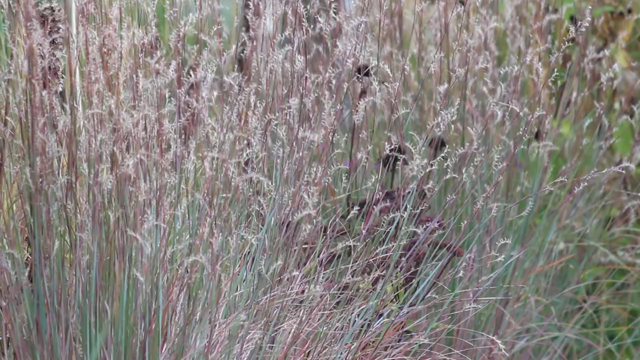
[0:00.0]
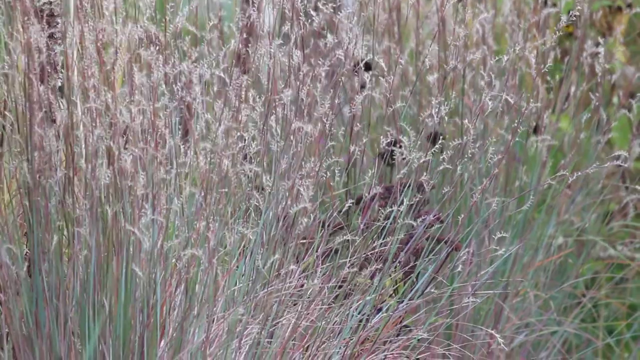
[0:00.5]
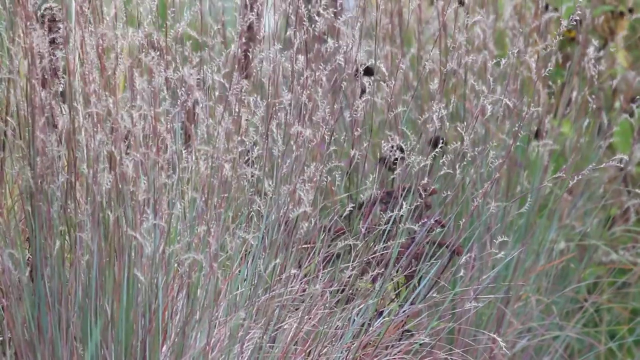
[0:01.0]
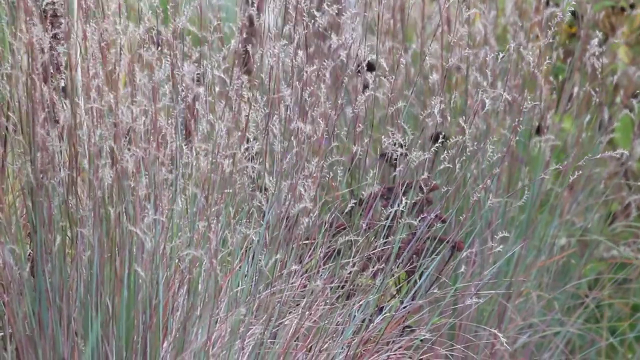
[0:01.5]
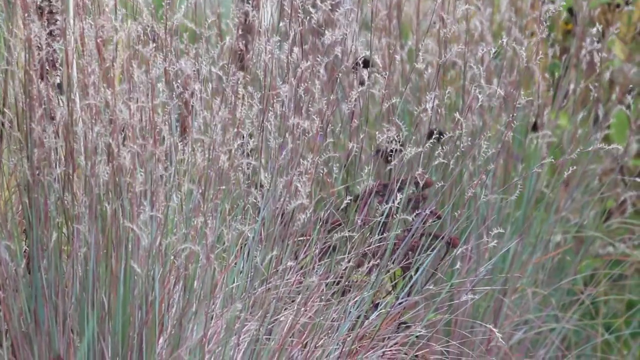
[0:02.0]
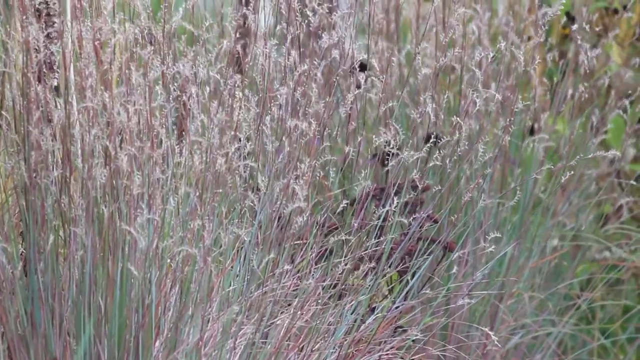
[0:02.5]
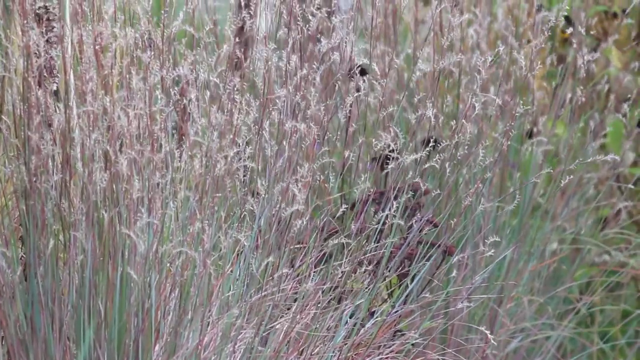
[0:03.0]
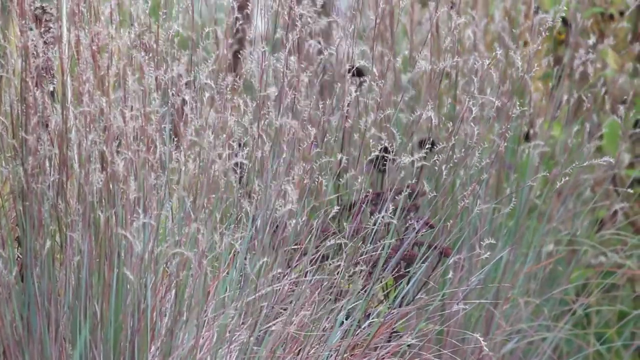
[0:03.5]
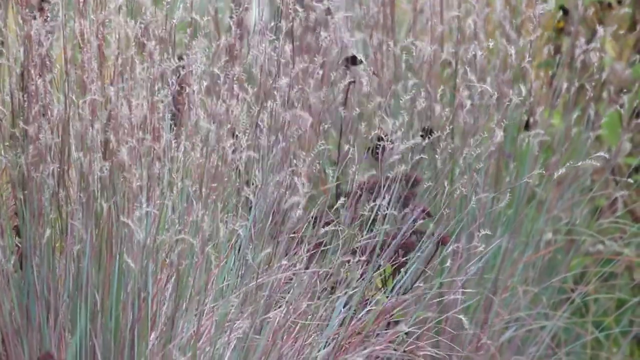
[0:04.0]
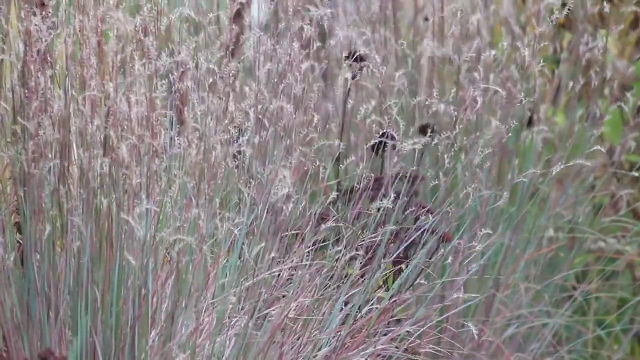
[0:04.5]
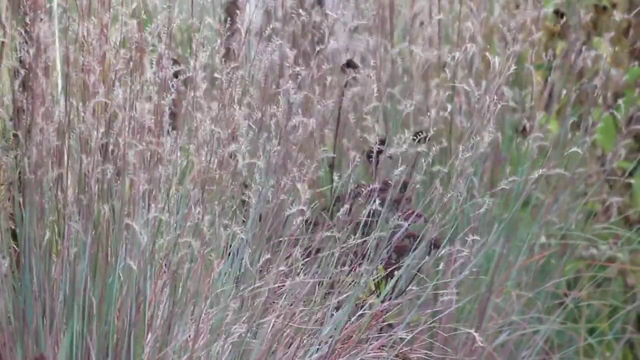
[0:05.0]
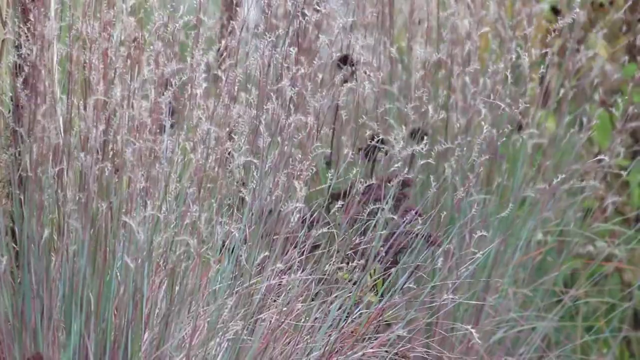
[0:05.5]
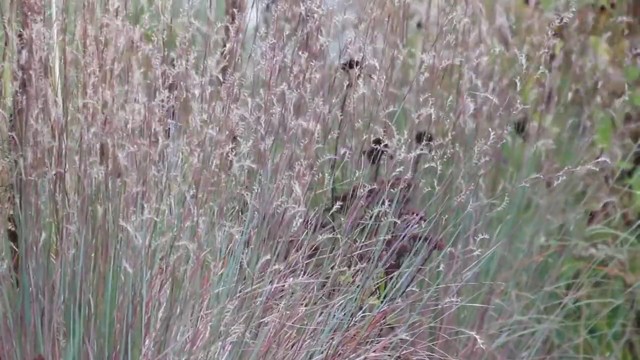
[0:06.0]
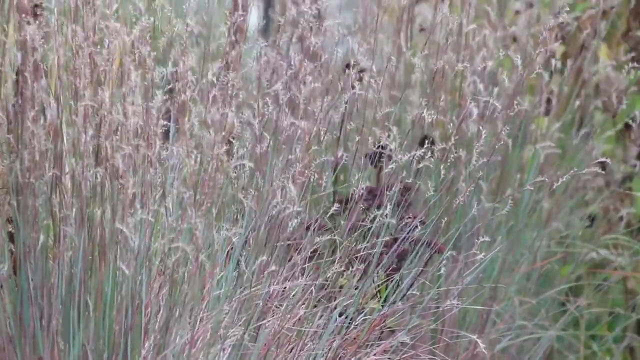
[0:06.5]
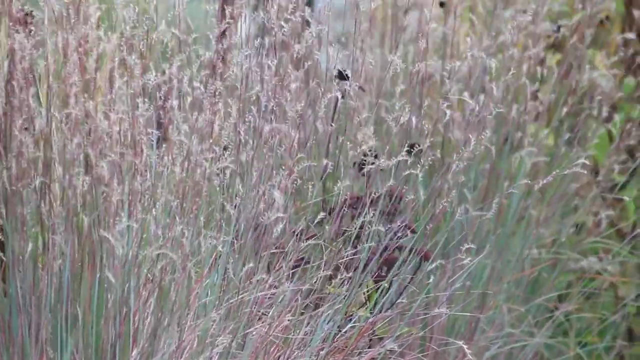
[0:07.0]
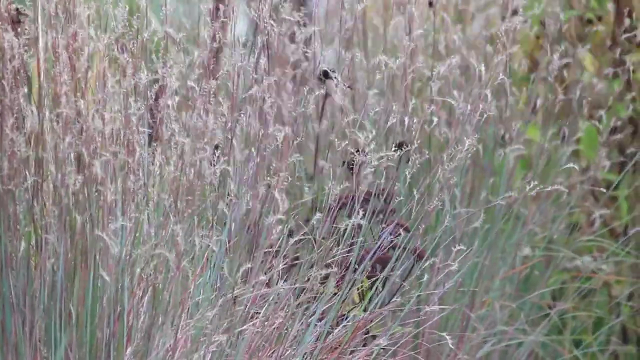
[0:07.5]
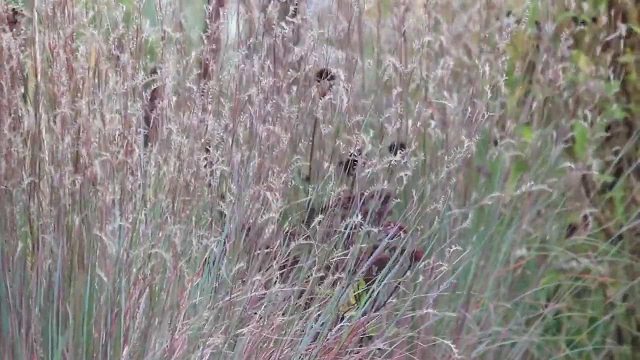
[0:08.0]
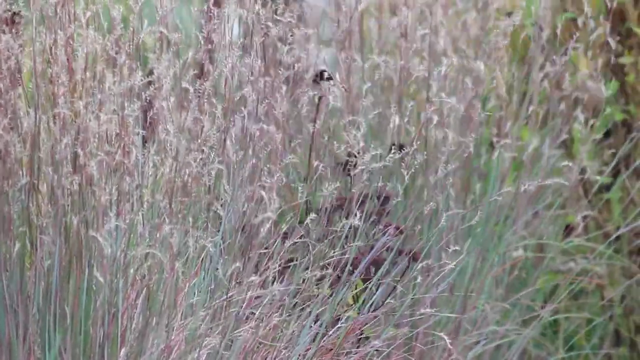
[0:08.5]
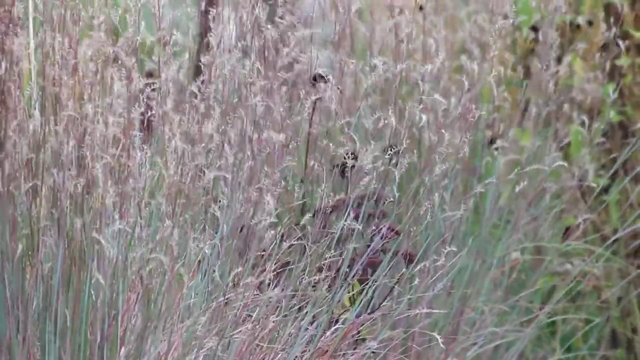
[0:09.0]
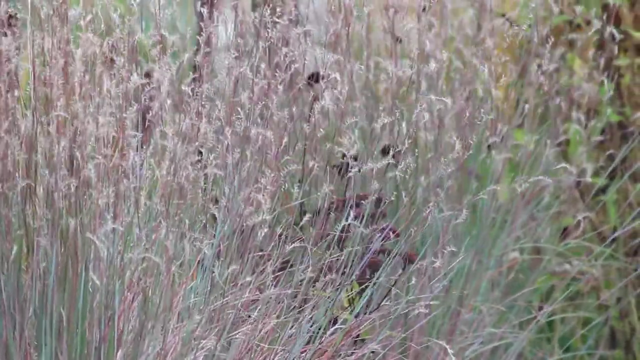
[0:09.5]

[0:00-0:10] Long grass that looks to be native grass fills the view, with wind blowing from right to left so the stems are moving. In the background, between the fern, there seems to be a different kind of plant with a different, blackish color, as if it has dried up. Some greenery is visible in the background, so the setting seems to be a natural habitat. All the ferns seem to be moving, and it looks like a sunny day.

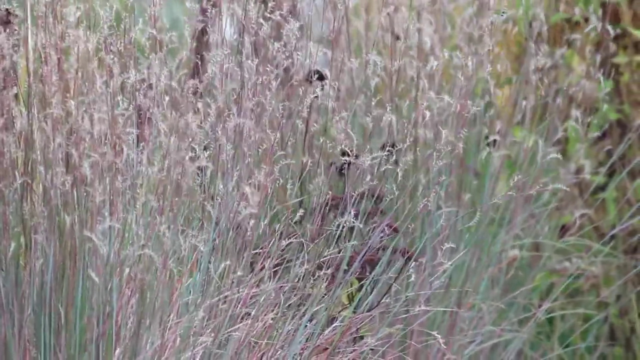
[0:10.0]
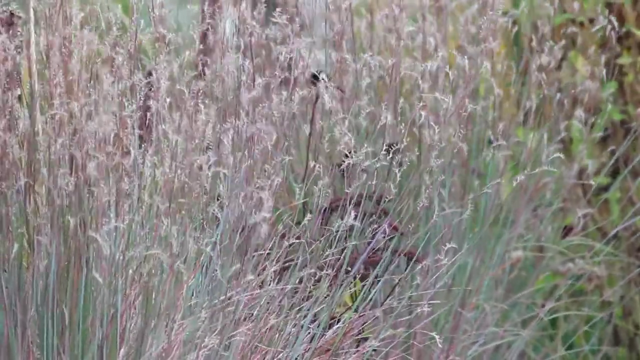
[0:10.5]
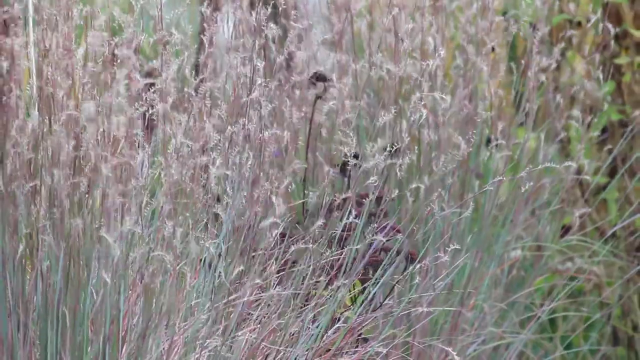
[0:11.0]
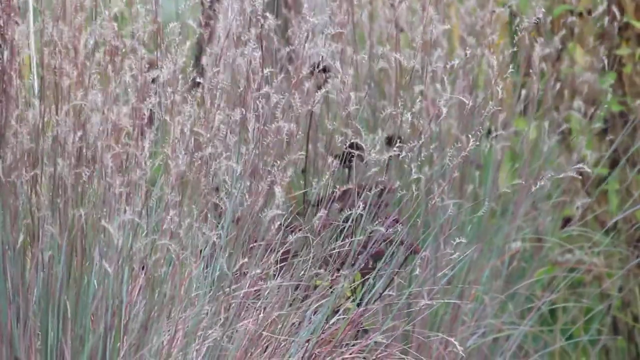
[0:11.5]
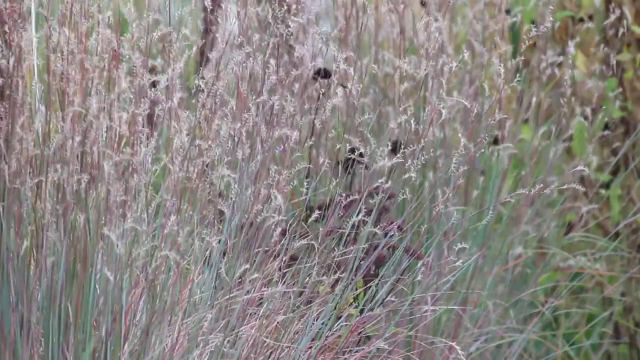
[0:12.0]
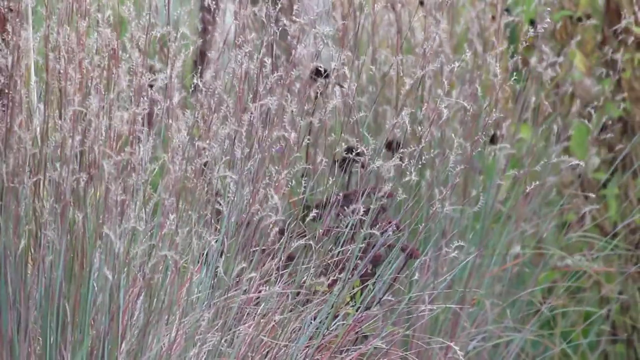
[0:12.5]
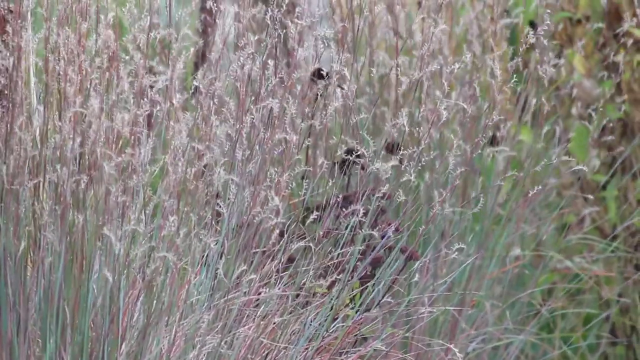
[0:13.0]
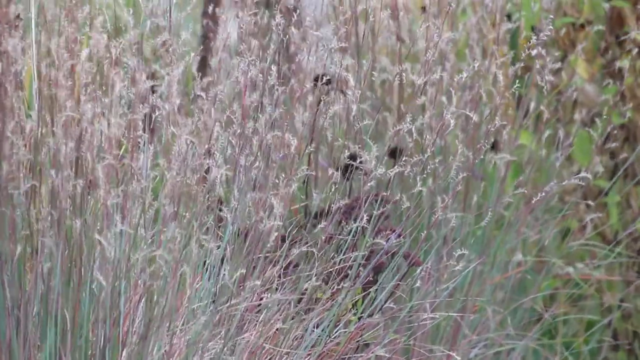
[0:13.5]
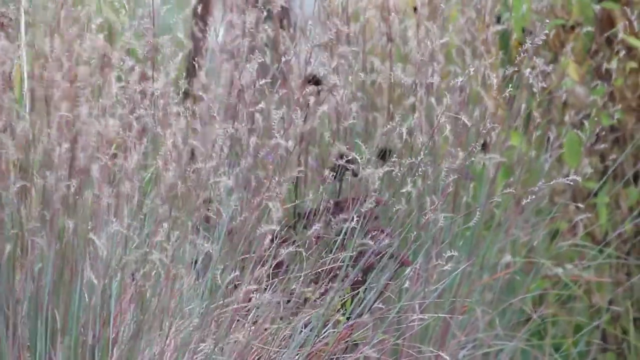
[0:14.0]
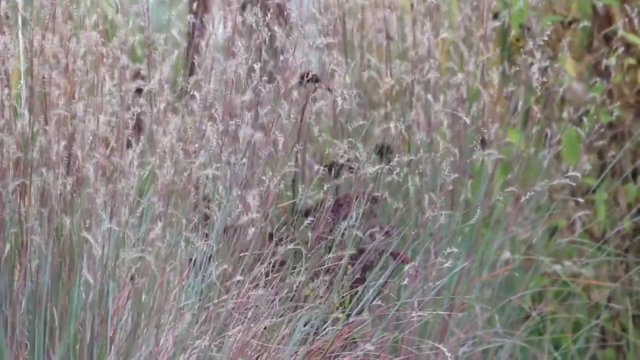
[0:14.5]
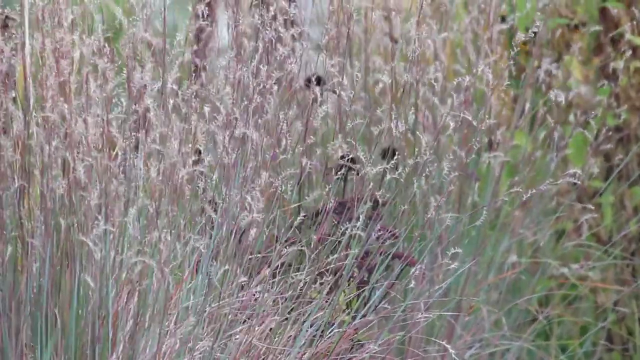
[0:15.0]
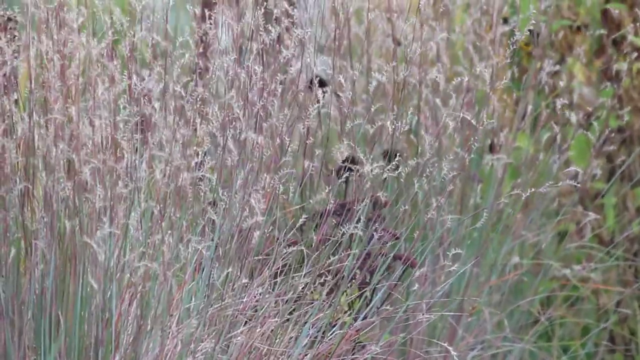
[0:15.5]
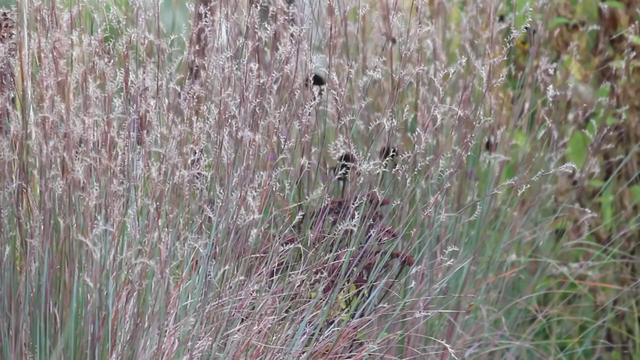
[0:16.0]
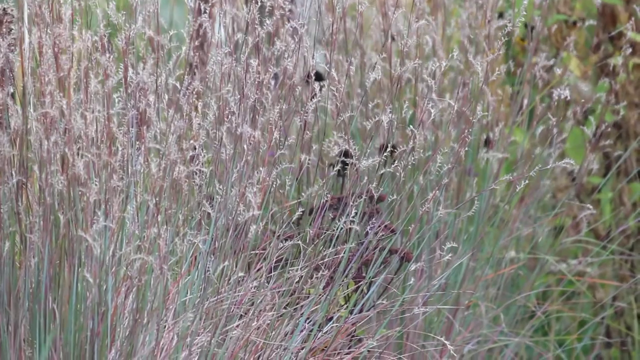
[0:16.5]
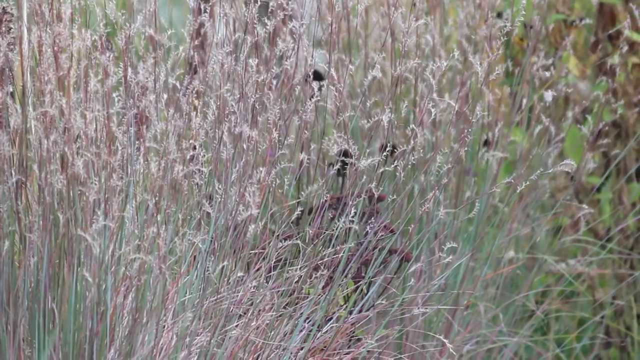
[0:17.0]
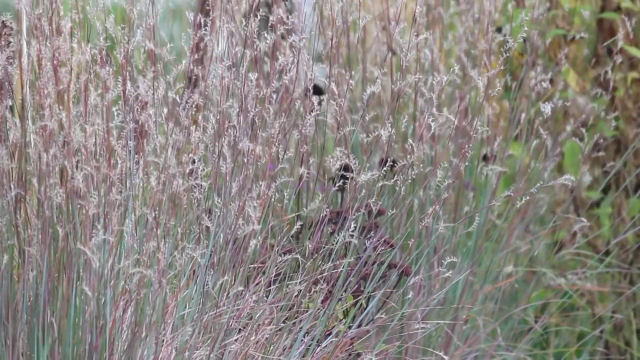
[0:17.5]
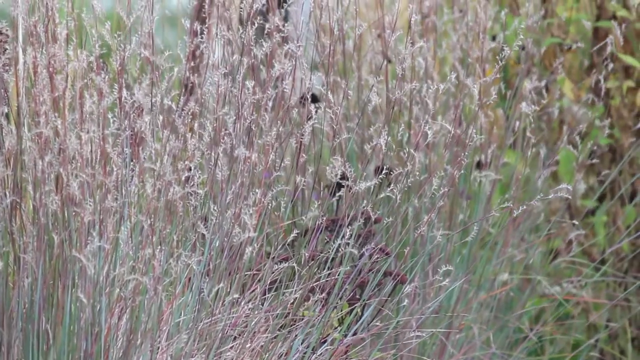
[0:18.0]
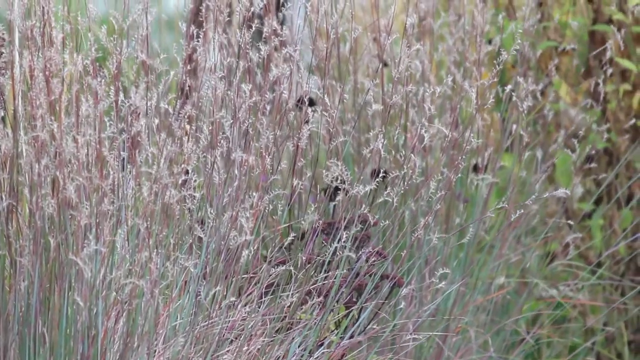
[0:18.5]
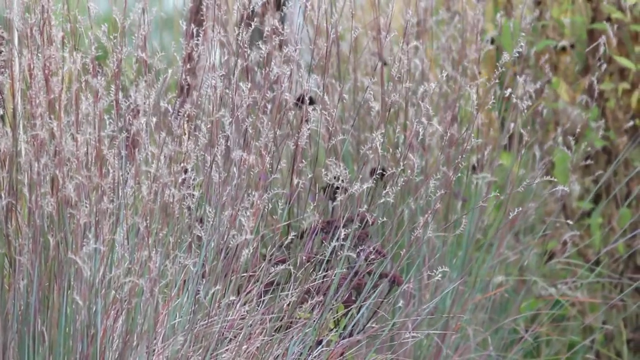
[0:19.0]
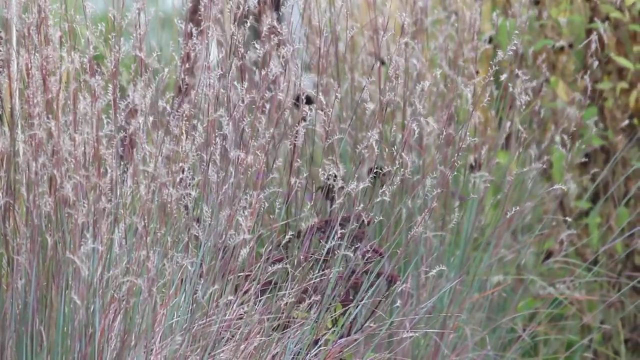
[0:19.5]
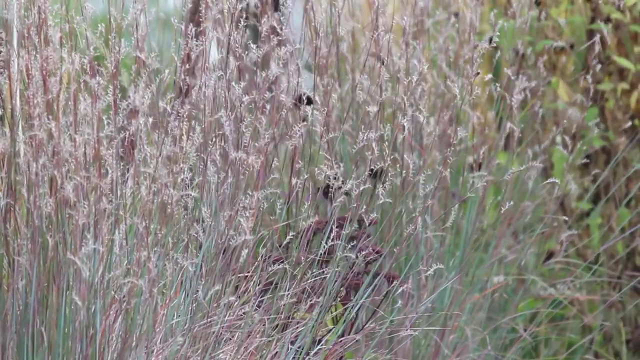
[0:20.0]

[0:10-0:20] As the wind blows, the fern moves from right to left and comes back to its position, while the other plant in the middle doesn't seem to be moving. That plant has the dried-up appearance of a rosebush, but it cannot be seen because of the fern in front of it. Some green weed or plants can be seen in the background. The fern seen in front is primarily brown, with some part of it in the grass that is green.